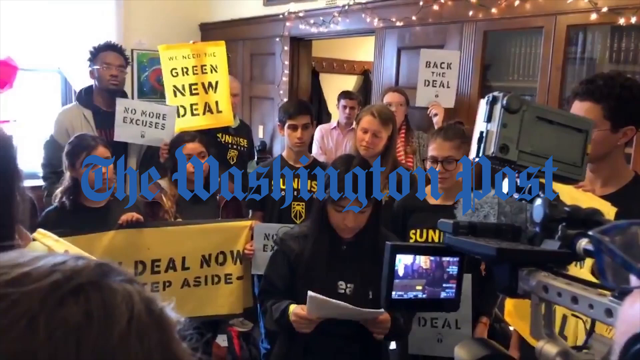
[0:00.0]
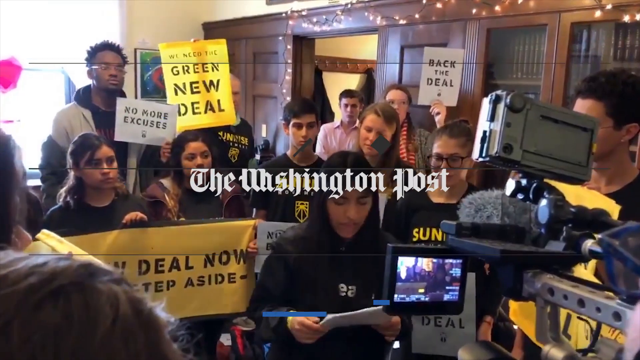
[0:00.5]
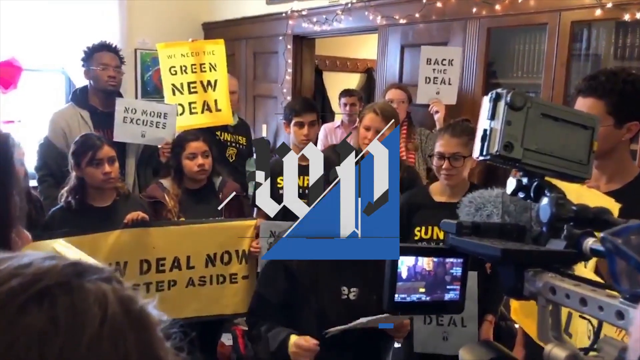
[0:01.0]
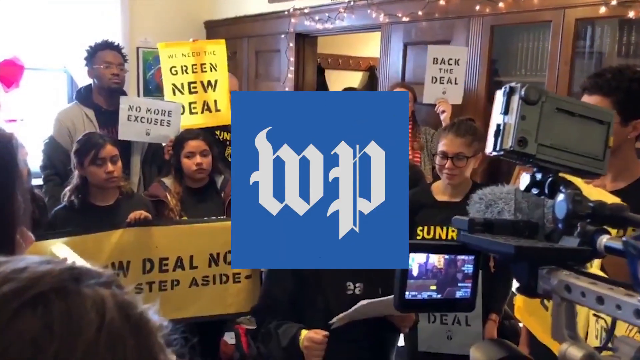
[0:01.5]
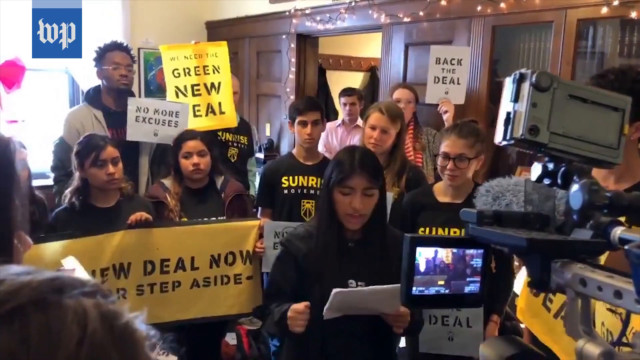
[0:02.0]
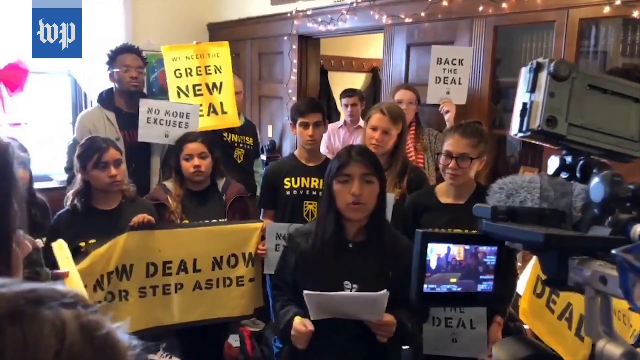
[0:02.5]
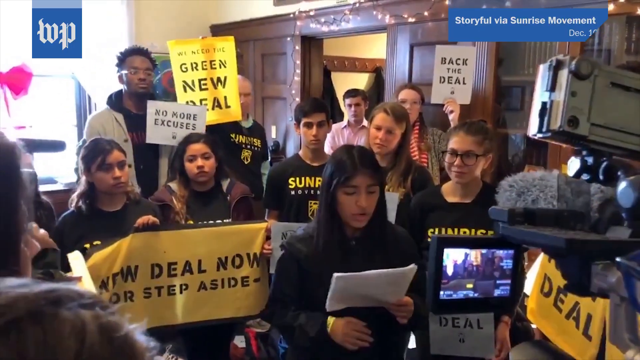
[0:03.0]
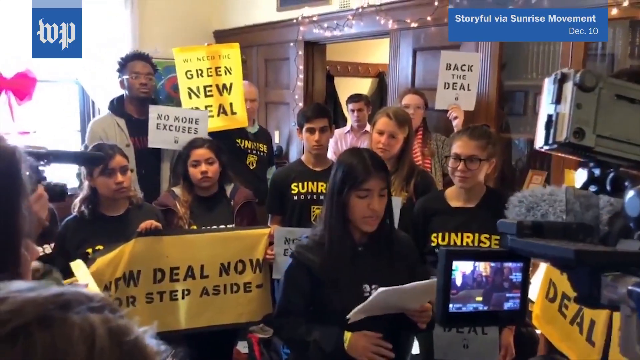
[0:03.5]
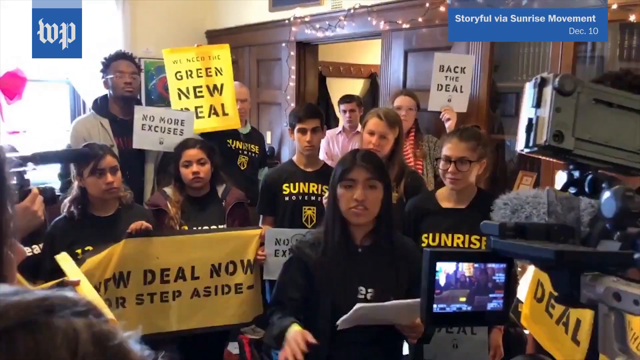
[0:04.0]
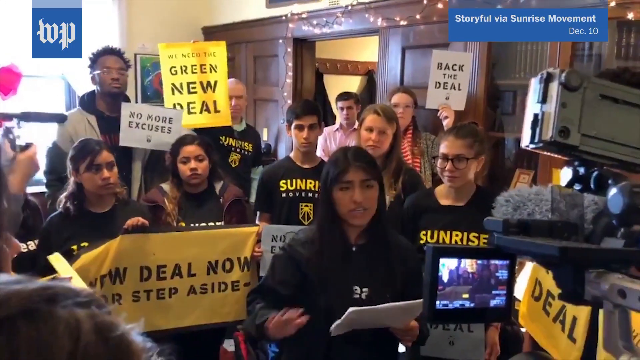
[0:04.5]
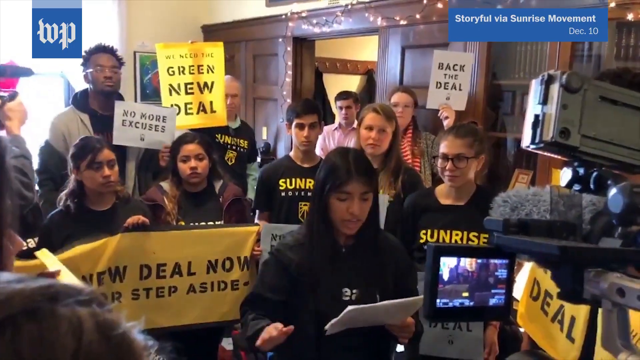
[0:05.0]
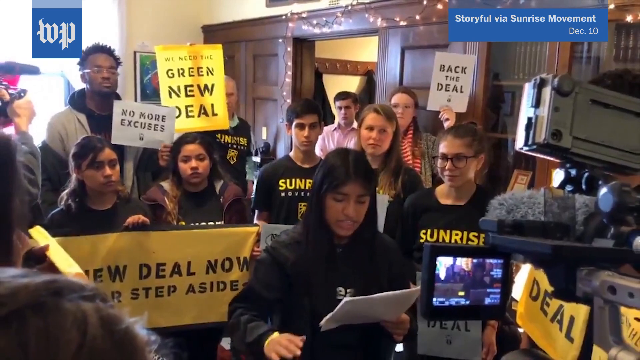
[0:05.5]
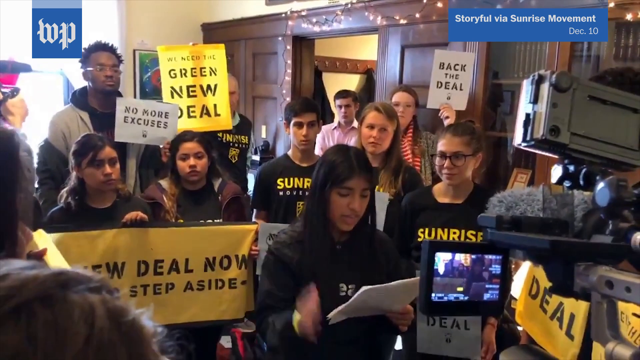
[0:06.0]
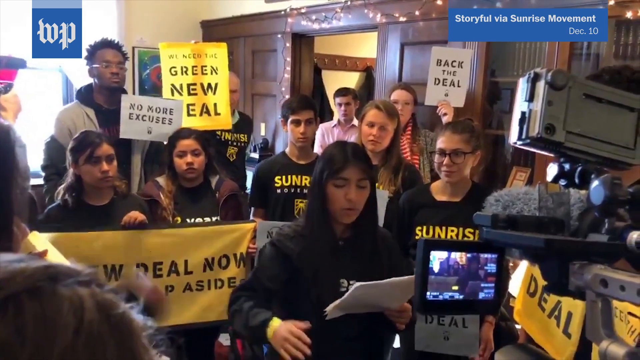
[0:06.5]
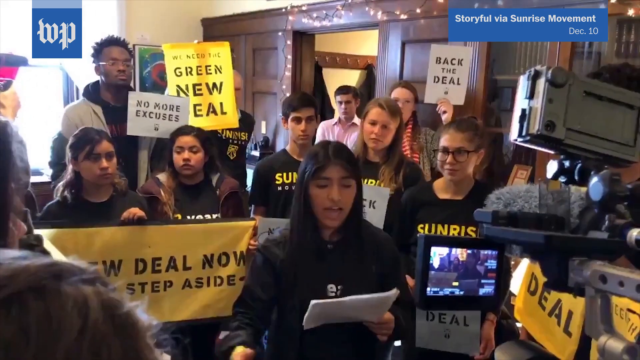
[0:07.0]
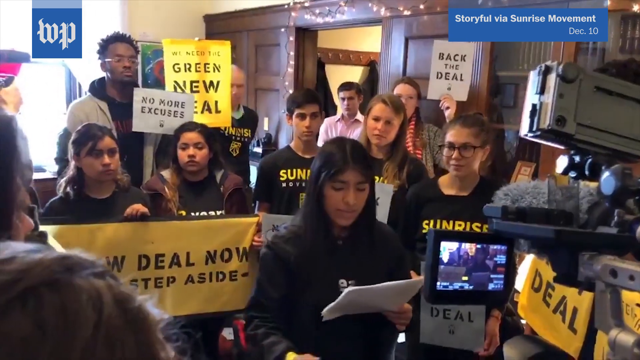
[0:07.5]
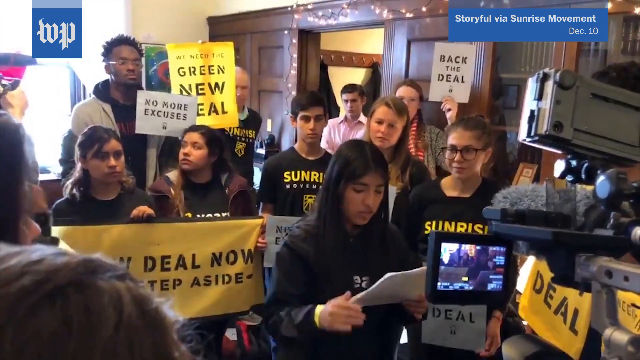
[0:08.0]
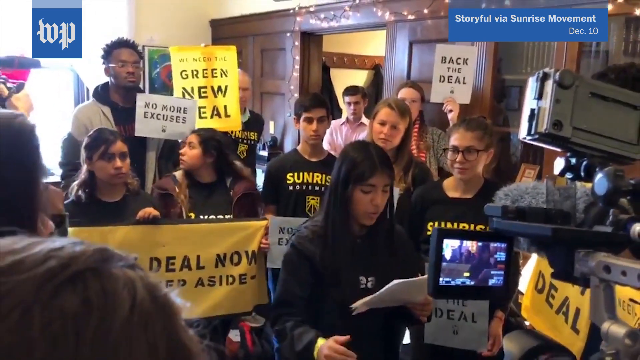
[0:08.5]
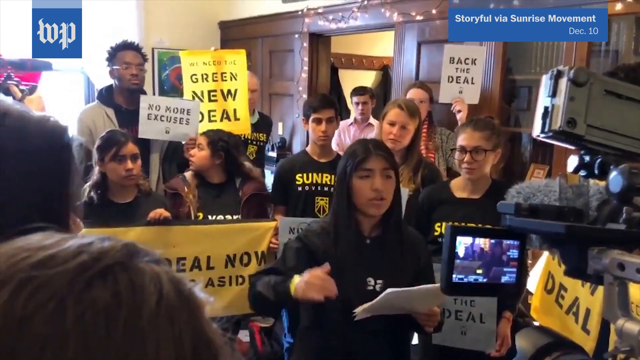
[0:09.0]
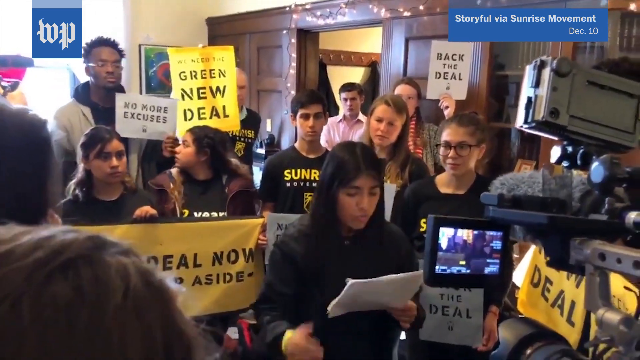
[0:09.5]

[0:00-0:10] The video starts with a picture of AOC, then moves to a press conference of Green New Deal supporters from the Sunrise Movement, possibly at a college. A brown girl seems to be giving a speech; she seems very passionate and reads from a paper. Behind her are a number of other young people: five or six white people, a very tall black student, and two more Hispanic or Indian girls holding up a sign that reads "New Deal Now or Step Aside." Other signs are held up too, one reading "No More Excuses" and another reading "Back the Deal."